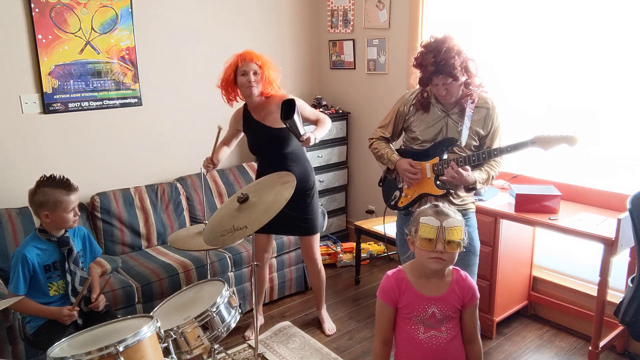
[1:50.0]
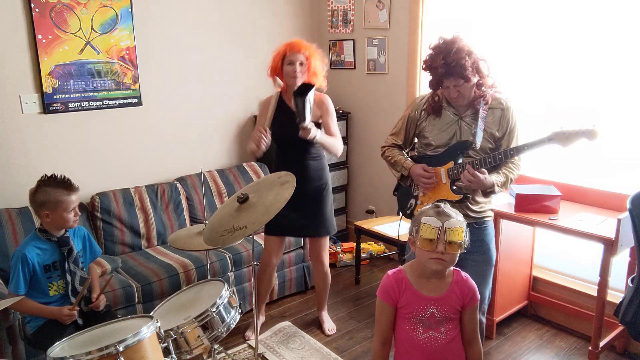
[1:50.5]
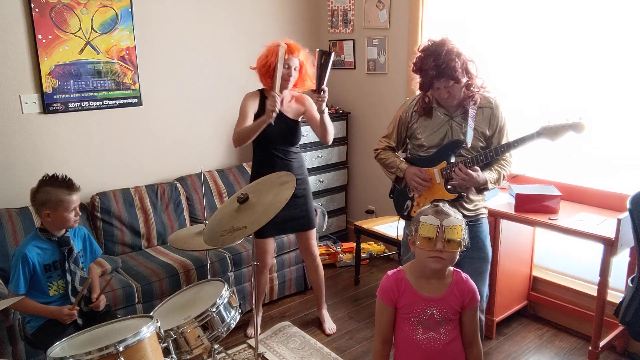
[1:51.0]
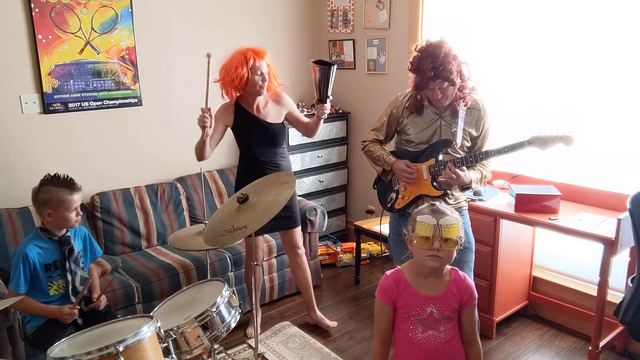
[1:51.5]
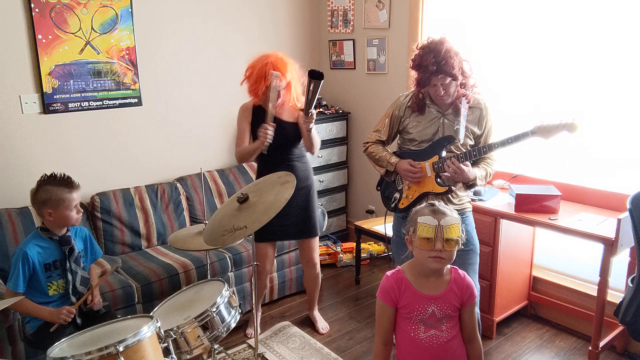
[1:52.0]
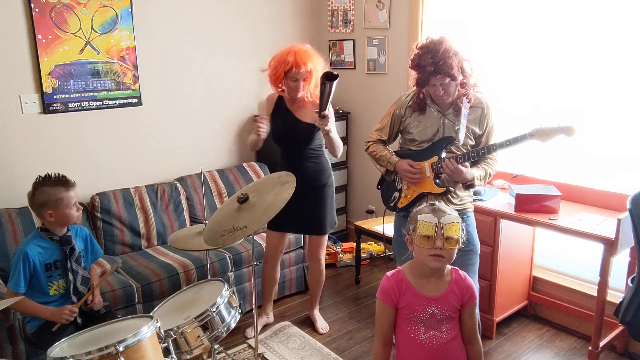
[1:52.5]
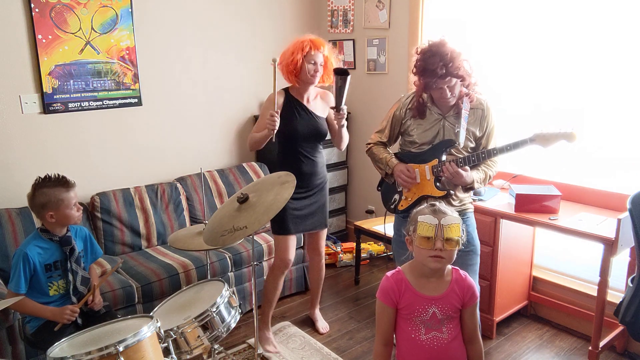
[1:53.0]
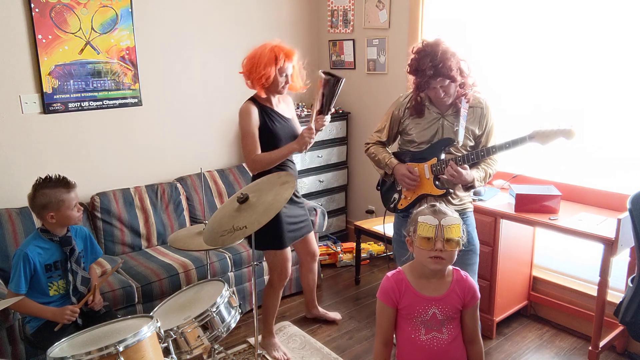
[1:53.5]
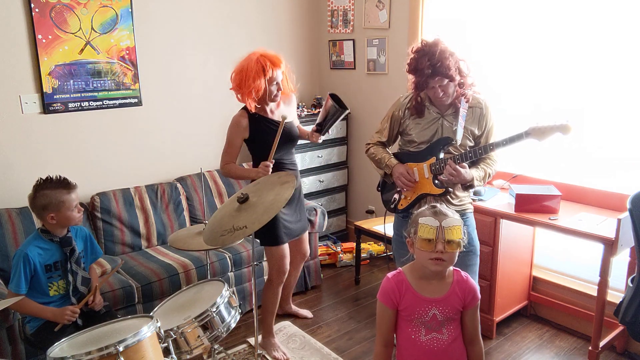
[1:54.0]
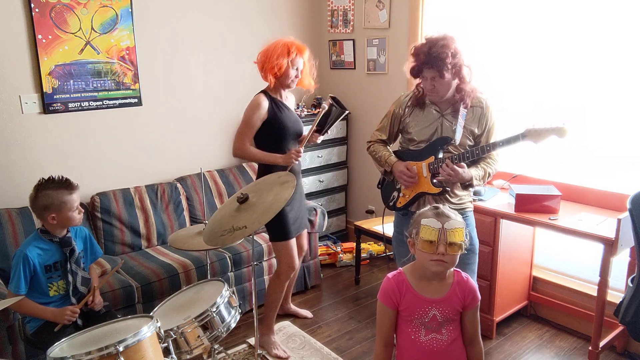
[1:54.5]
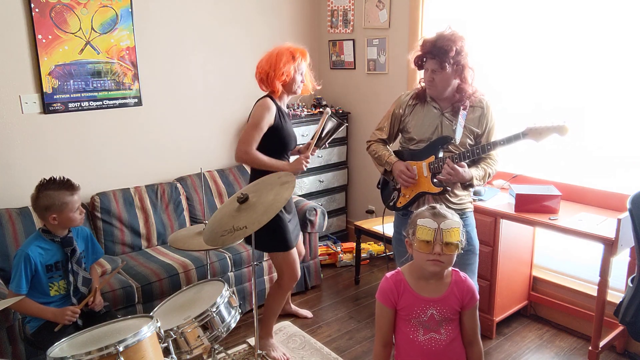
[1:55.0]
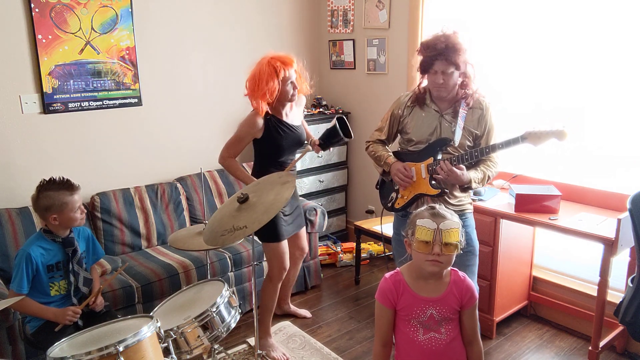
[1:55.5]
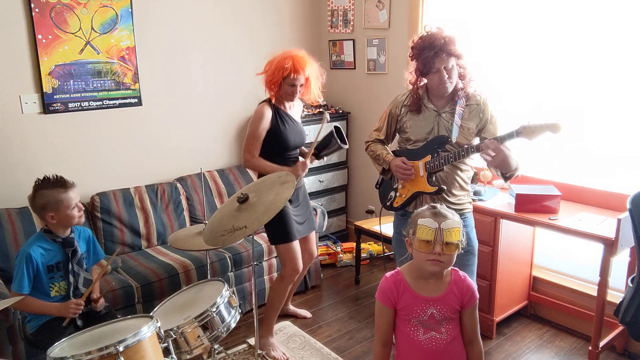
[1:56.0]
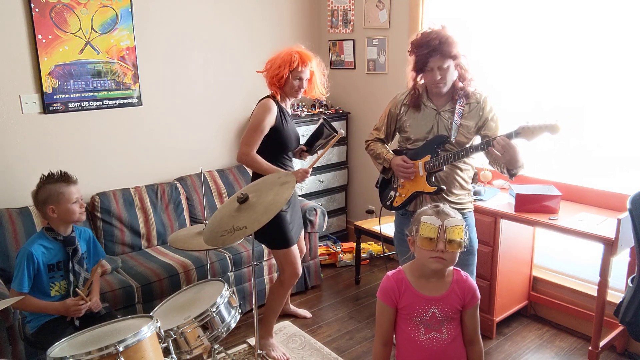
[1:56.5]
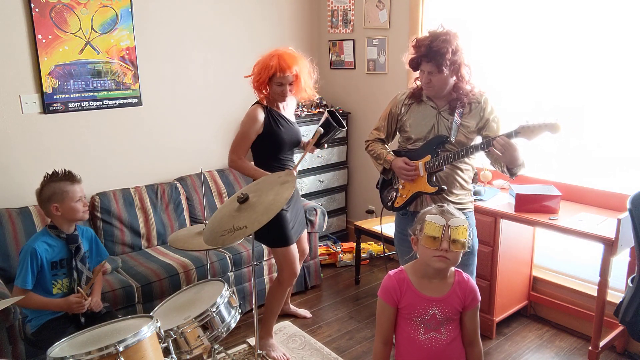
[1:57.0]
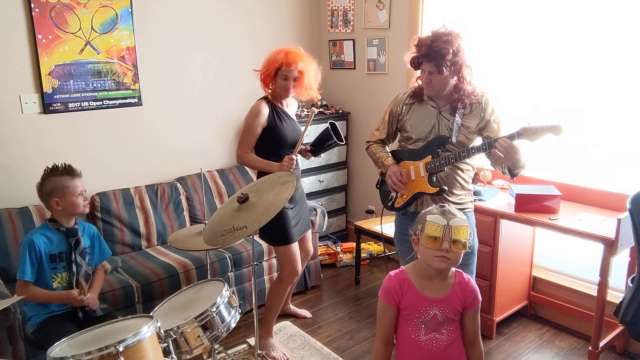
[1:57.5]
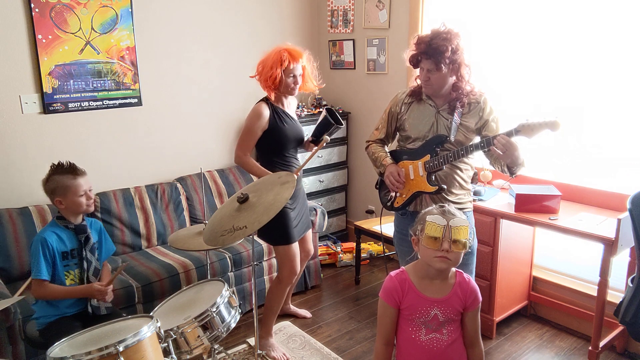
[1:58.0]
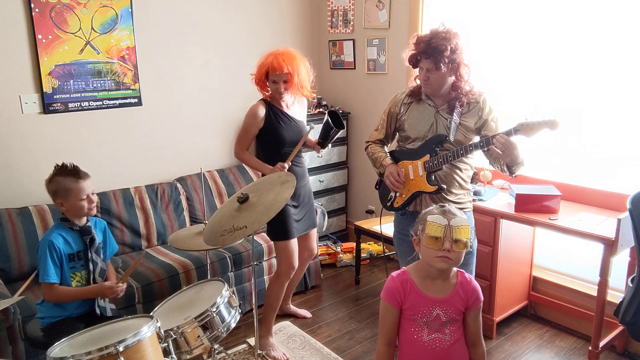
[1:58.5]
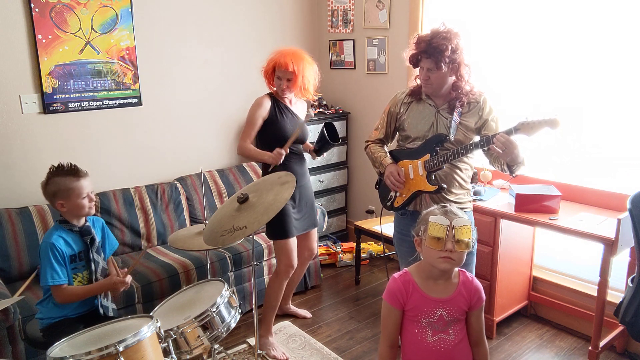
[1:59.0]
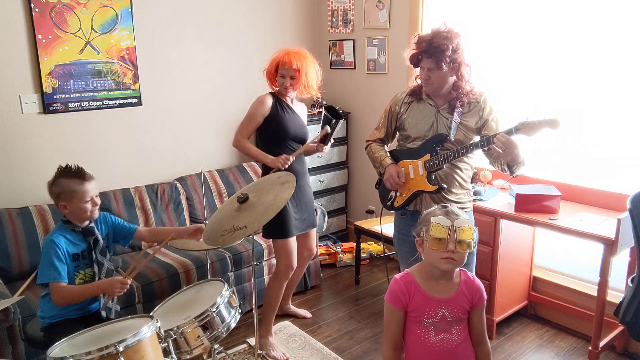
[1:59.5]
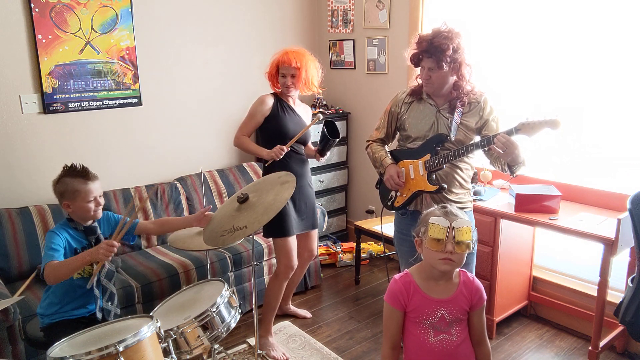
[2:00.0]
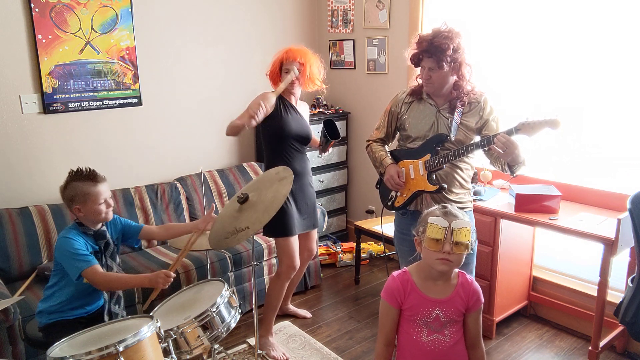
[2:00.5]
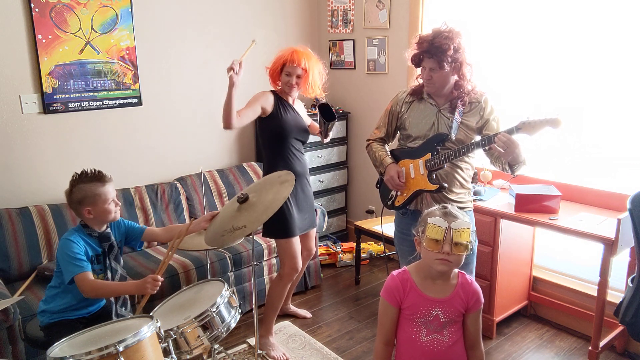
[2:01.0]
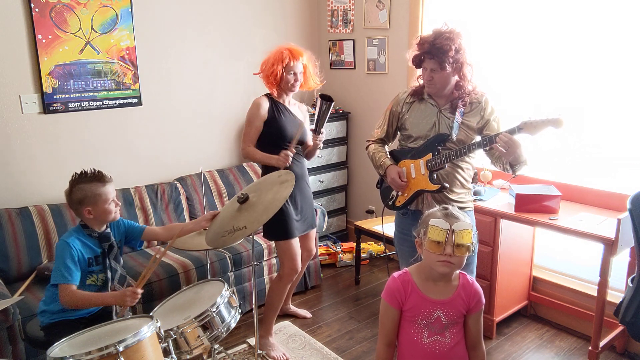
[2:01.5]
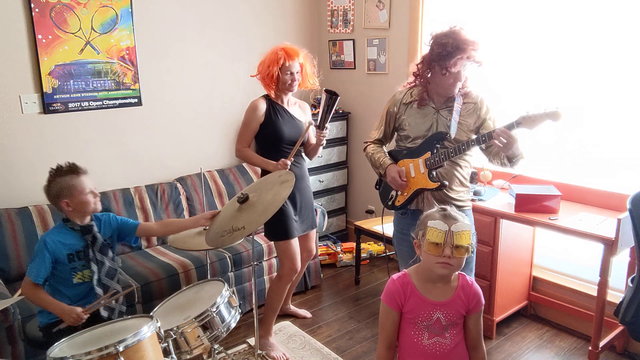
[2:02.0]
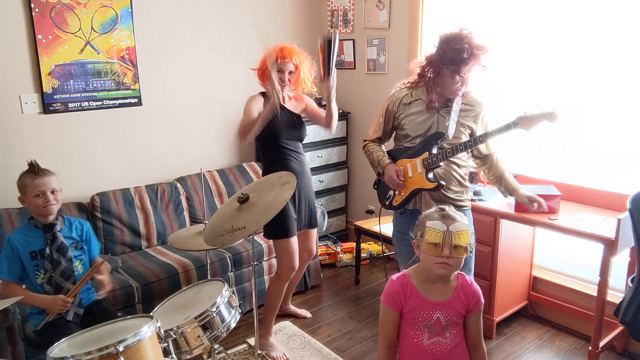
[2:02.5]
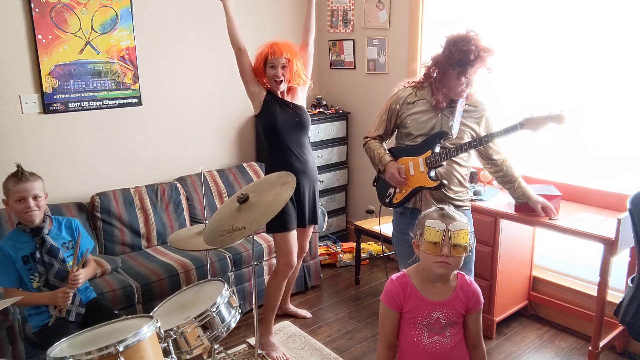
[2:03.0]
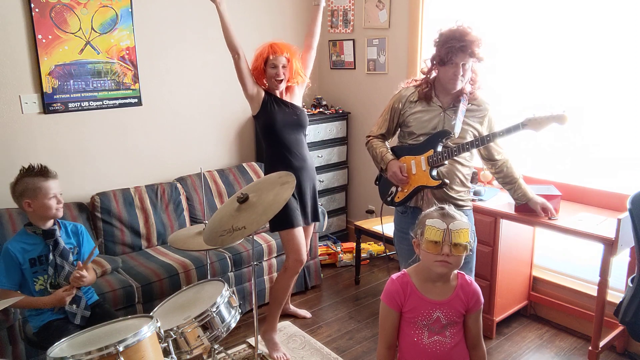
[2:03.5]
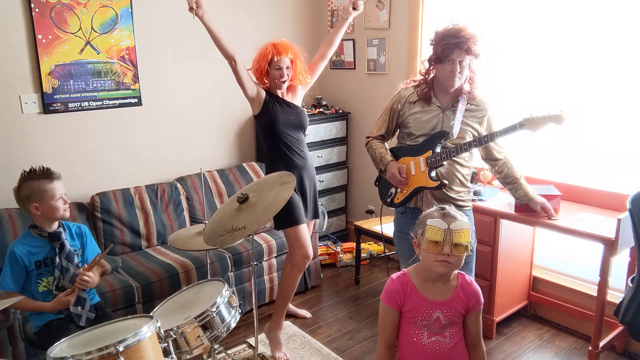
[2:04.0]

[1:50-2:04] The girl is not singing anymore and just stands there, a bit awkwardly. She still has the glasses on, which have root beer floats on top: the lenses are yellow, the mug is yellow, and white foam is above it. The little boy watches his parents dance; they look like they have taken over and are having more fun than the kids. He hits the drumsticks against each other, then quickly hits the cymbal, and the mom raises her hands in the air as if cheering.